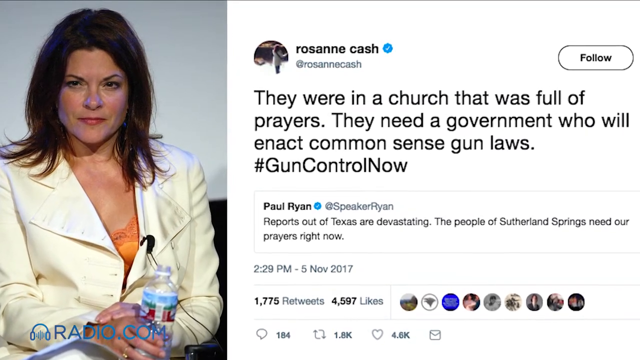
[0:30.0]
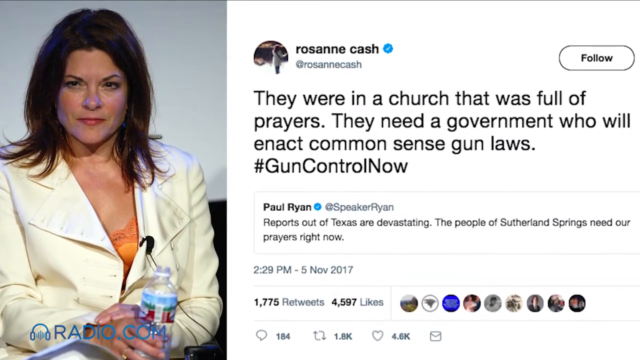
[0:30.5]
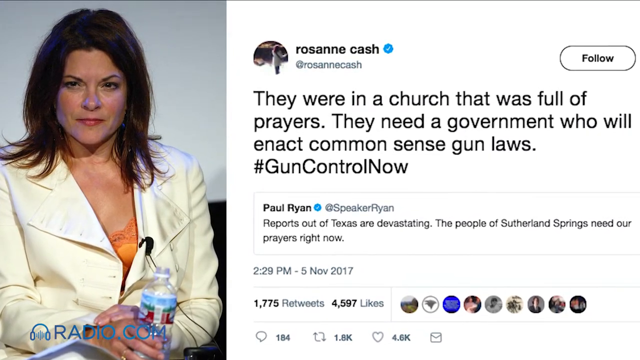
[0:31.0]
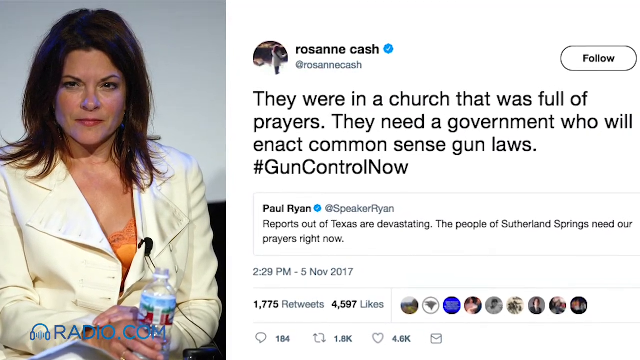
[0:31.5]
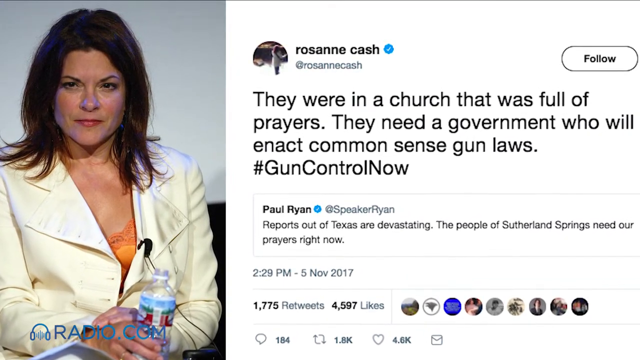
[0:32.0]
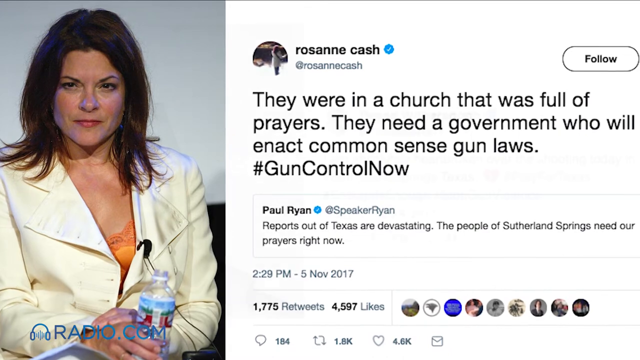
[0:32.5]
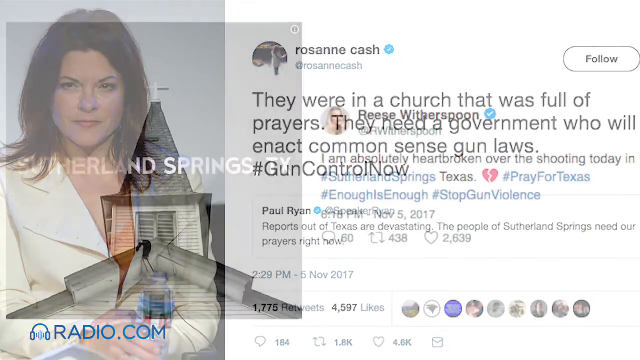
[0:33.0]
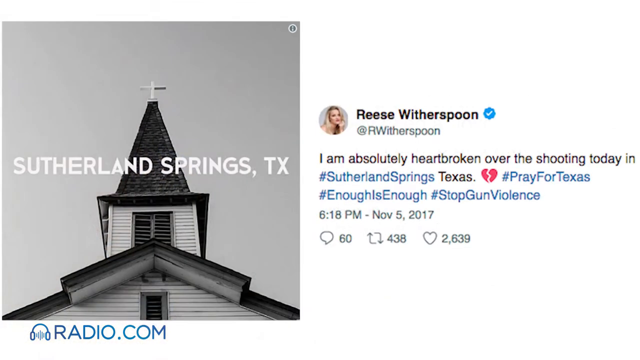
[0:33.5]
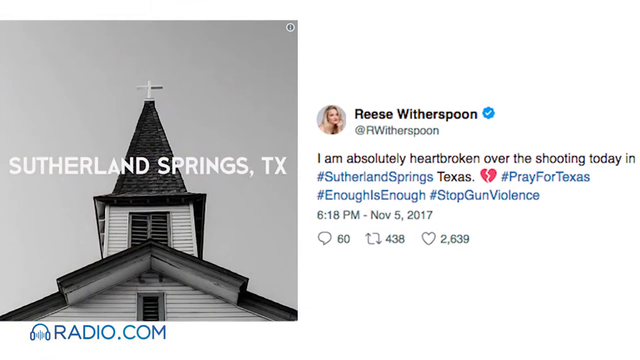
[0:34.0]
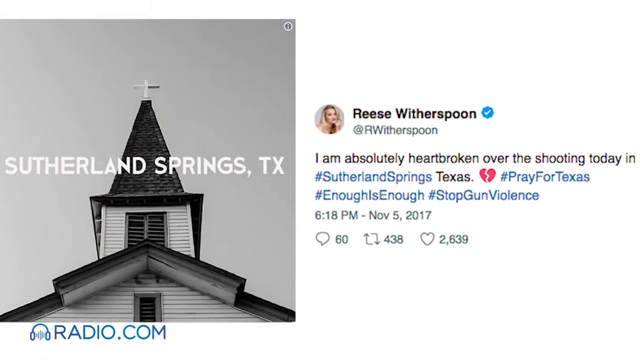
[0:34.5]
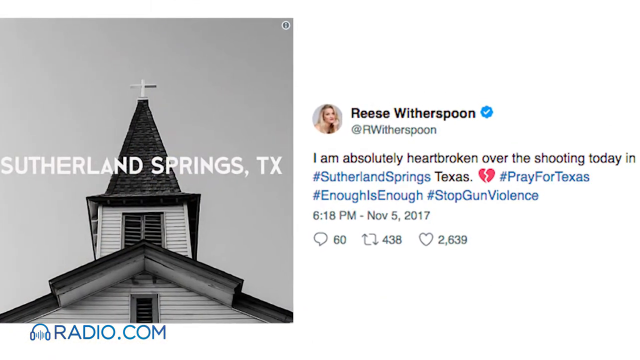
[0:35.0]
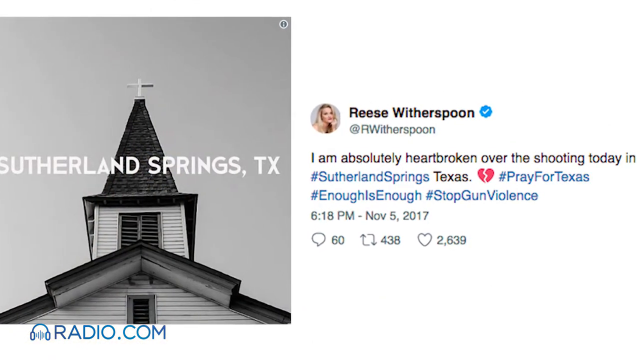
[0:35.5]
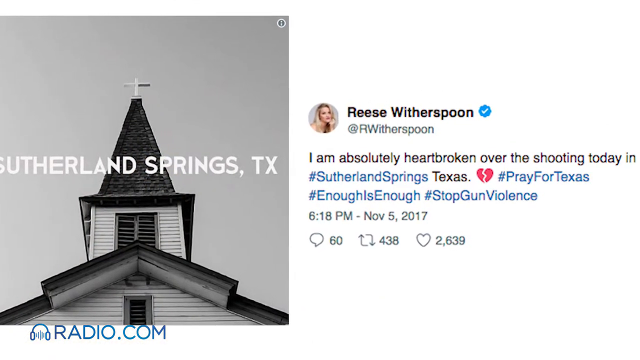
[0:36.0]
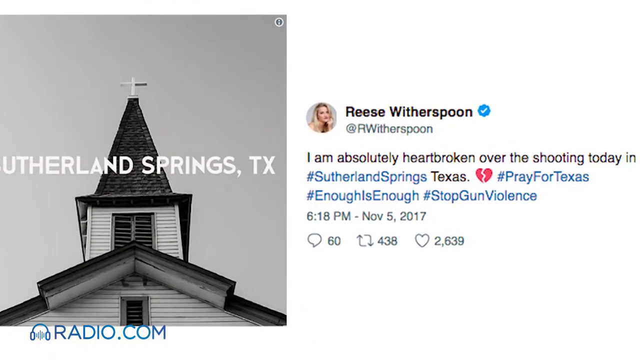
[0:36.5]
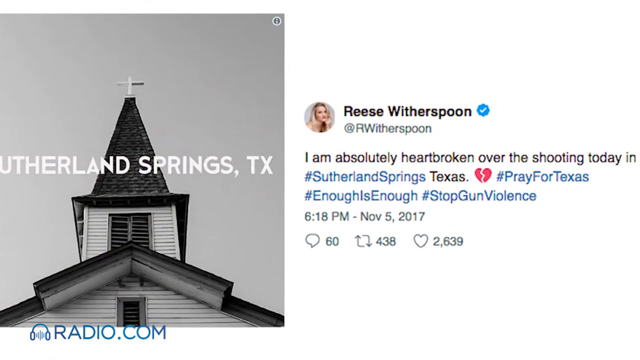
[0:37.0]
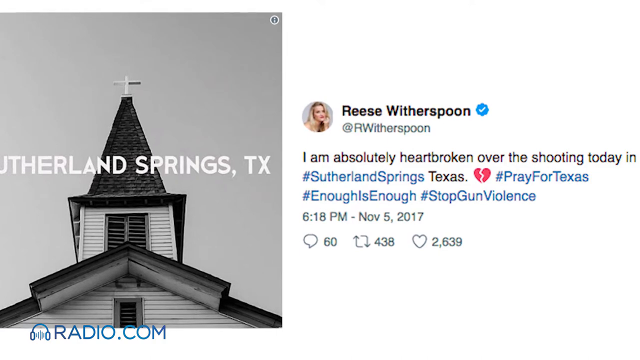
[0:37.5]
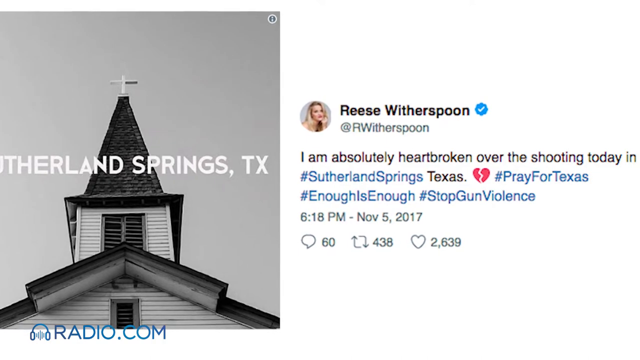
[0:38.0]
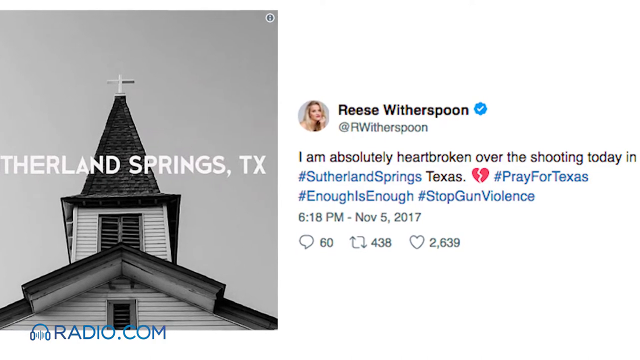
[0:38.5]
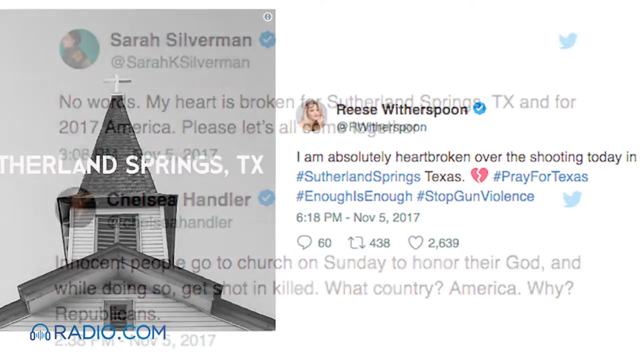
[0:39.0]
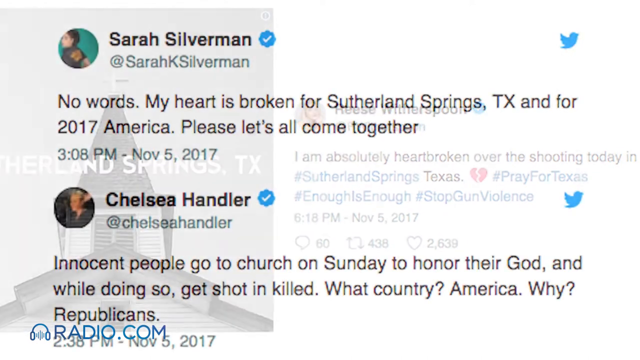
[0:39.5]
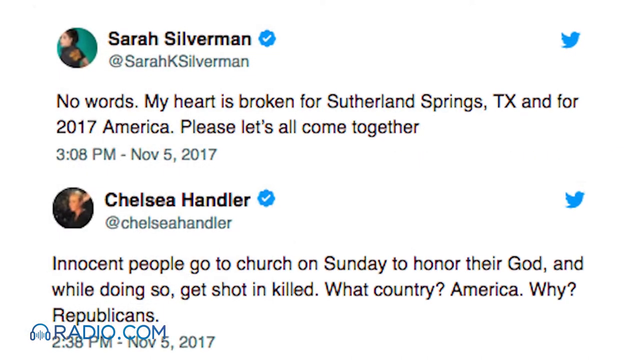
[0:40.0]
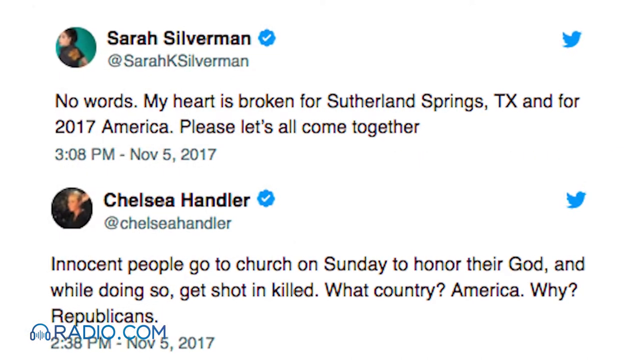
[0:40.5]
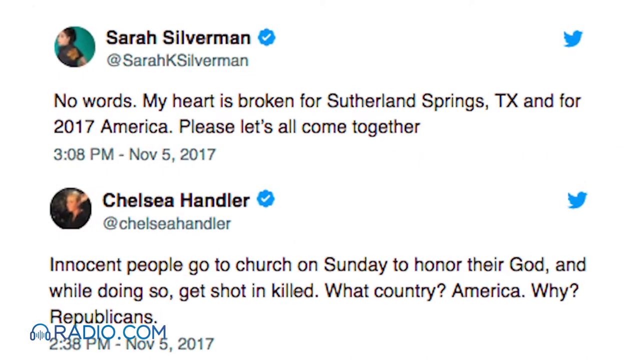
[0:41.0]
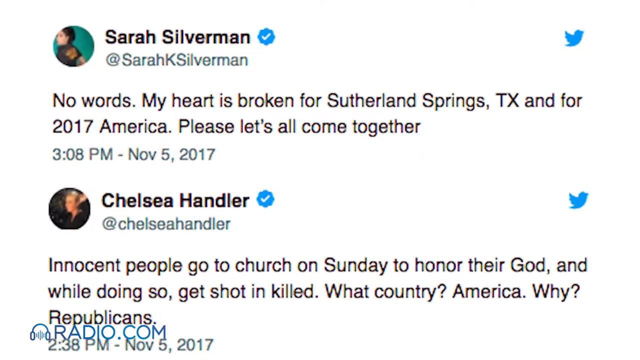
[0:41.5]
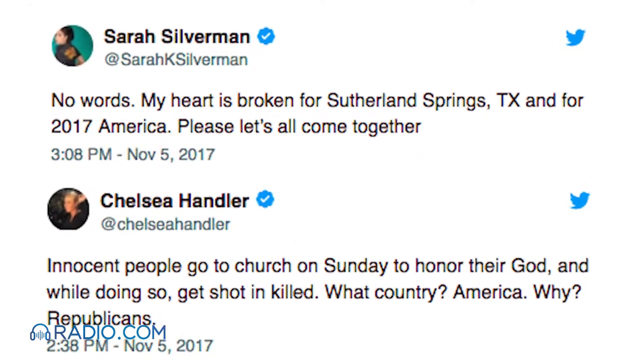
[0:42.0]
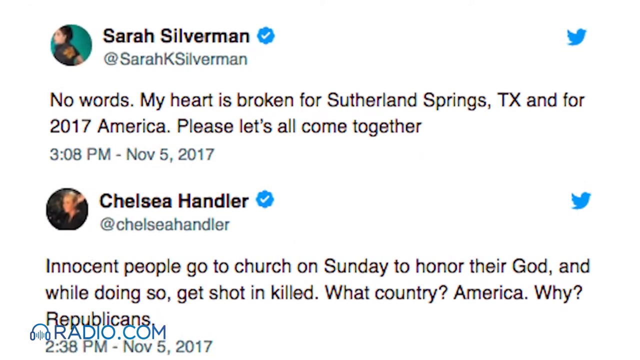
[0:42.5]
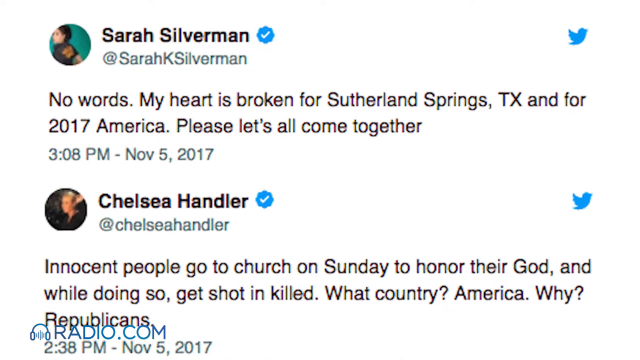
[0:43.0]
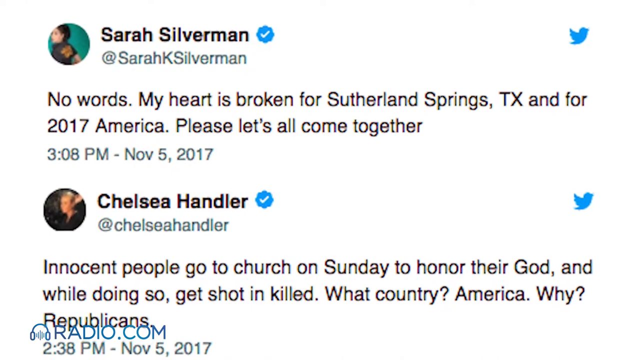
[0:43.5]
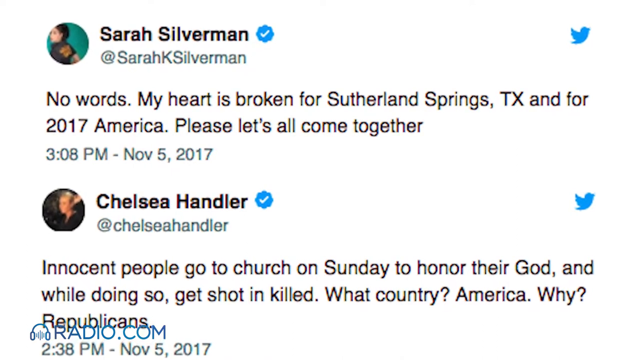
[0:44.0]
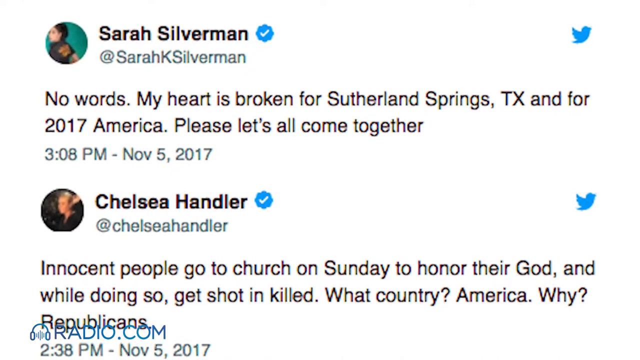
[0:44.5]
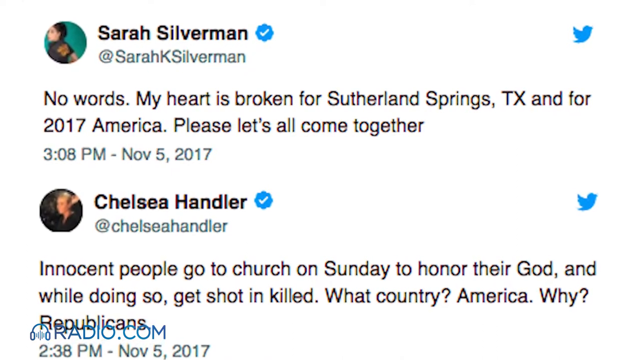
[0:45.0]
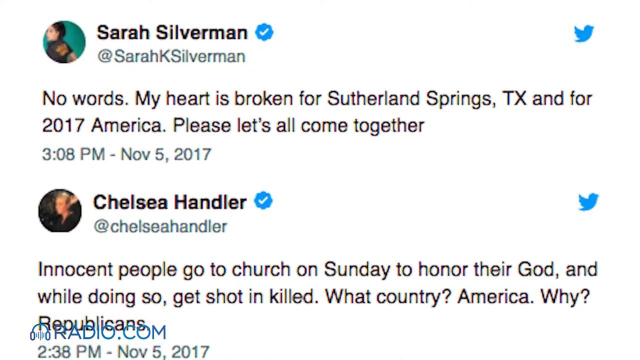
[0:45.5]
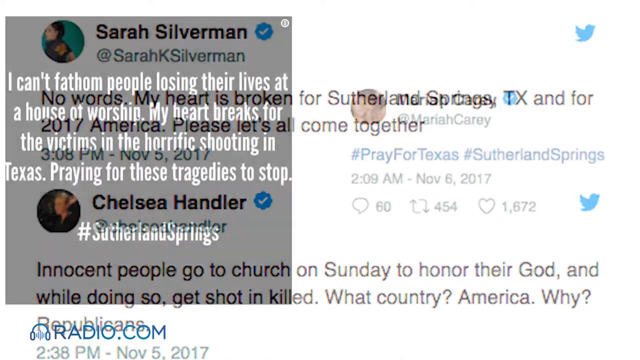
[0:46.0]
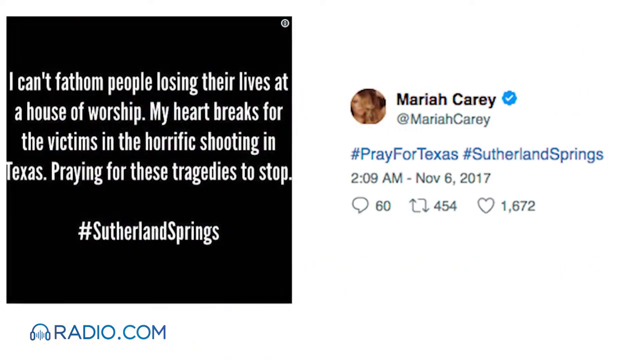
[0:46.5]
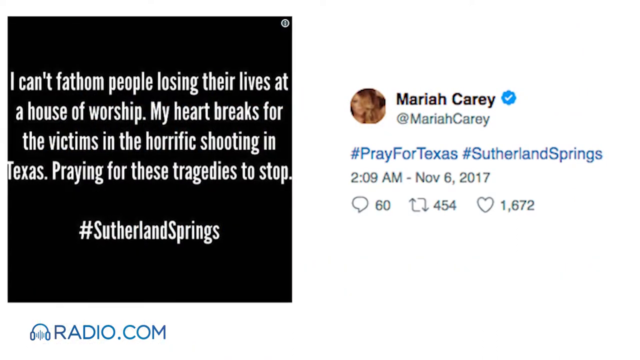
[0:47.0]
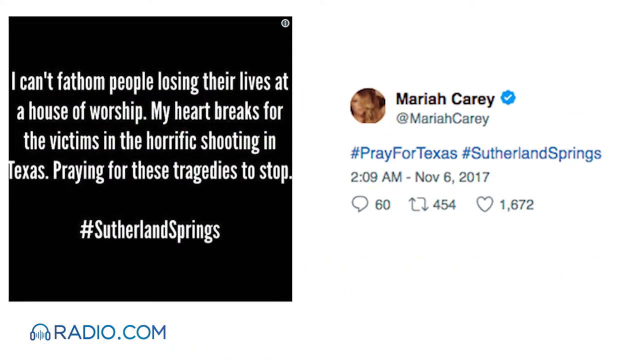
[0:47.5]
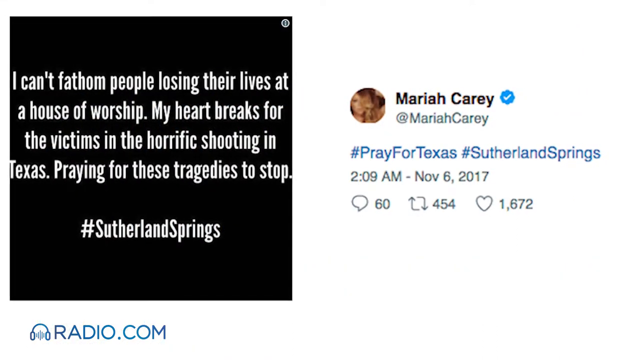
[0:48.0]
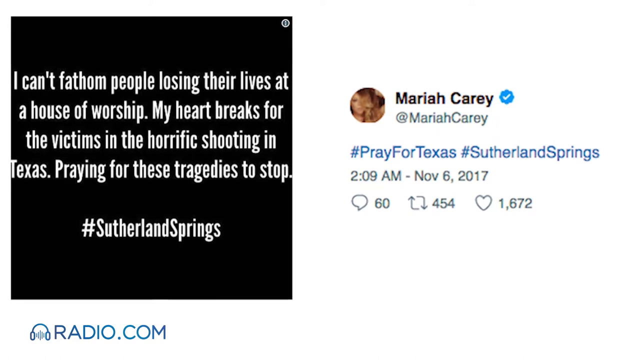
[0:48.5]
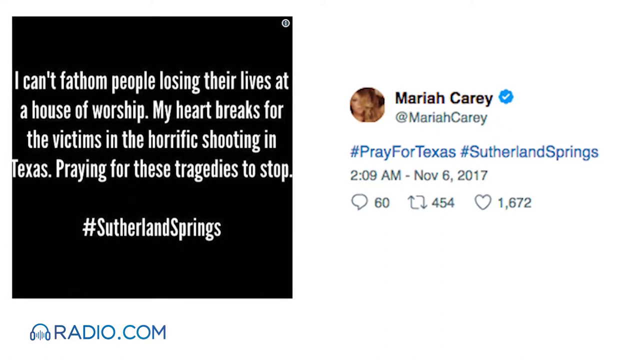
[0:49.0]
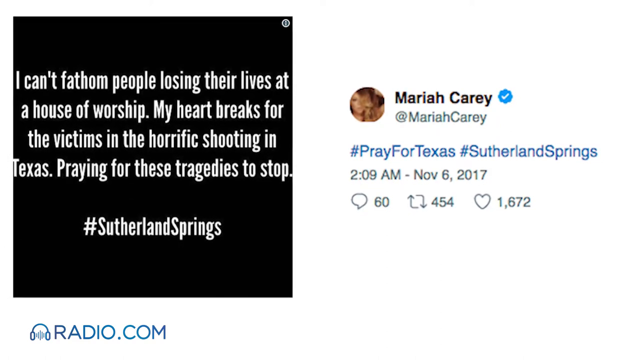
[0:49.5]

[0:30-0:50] A tweet from Reese Witherspoon appears, with a blue tick next to her name and a little round picture. It reads "@RWitherspoon, I'm absolutely heartbroken over the shooting today in #Sutherlandsprings, Texas," followed by a broken heart emoji and "#prayforTexas #enoughisenough #stopgunviolence." It was tweeted at 6.18pm on the 5th of November 2017. Next to the tweet is a black and white picture of a building with "Sutherland Springs TX" written on it. More tweets follow. One from Sarah Silverman says "No words my heart is broken for Sutherland Springs TX and for 2017 America please let's all come together." Below it, a tweet from Chelsea Handler says "Innocent people go to church on Sunday to honor their god and while doing so get shot and killed what country America why Republicans." Then a tweet from Mariah Carey says "#prayfortexas #sutherlandsprings", and on the left are the words "I can't fathom people losing their lives at a place of worship my heart breaks for the victims in the horrific shooting in Texas praying for these tragedies to stop #sutherlandsprings".